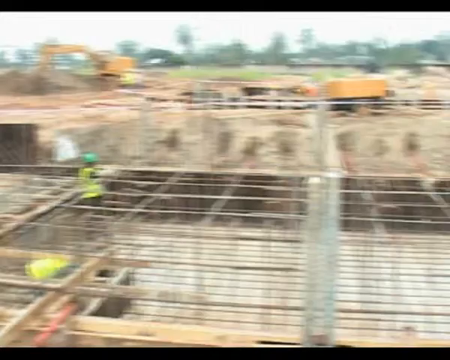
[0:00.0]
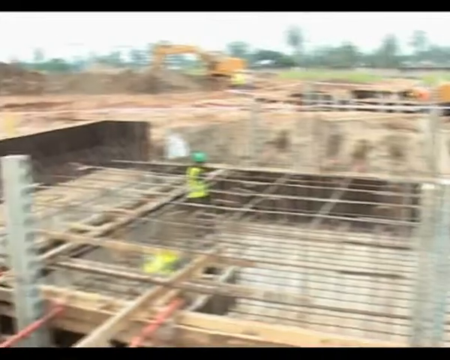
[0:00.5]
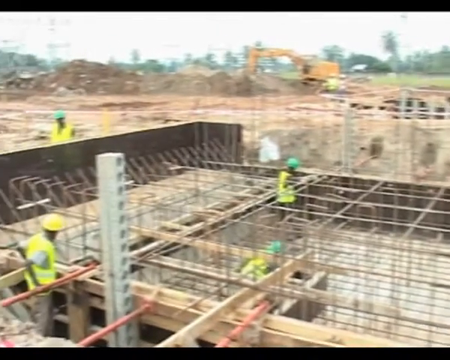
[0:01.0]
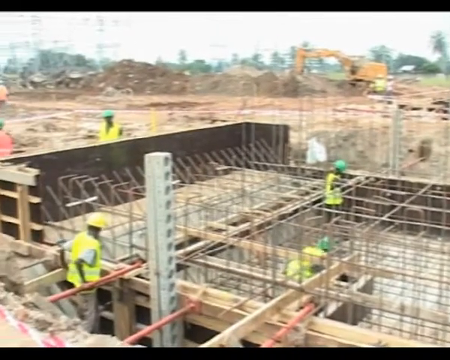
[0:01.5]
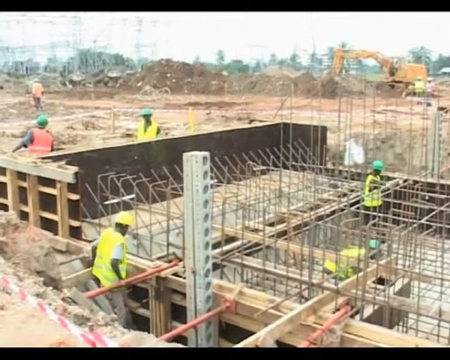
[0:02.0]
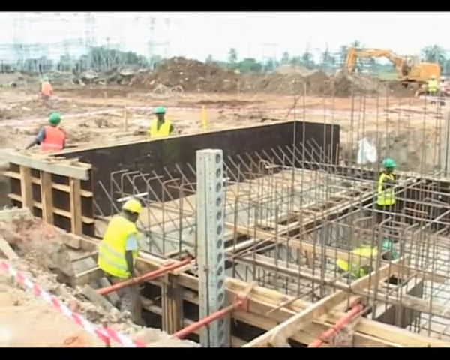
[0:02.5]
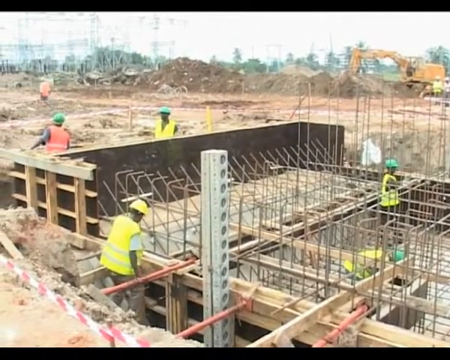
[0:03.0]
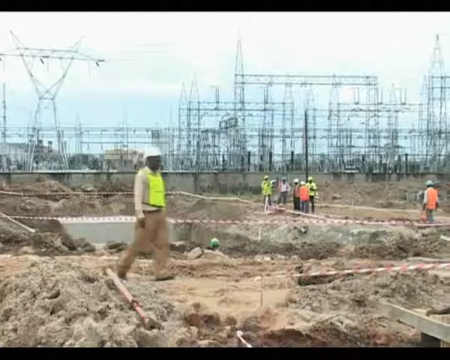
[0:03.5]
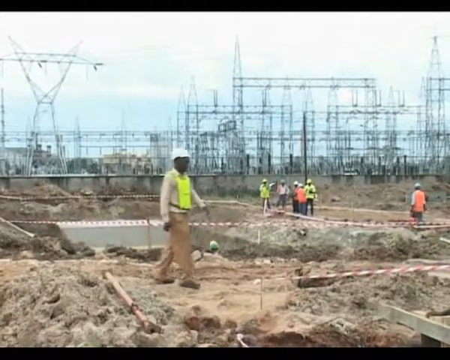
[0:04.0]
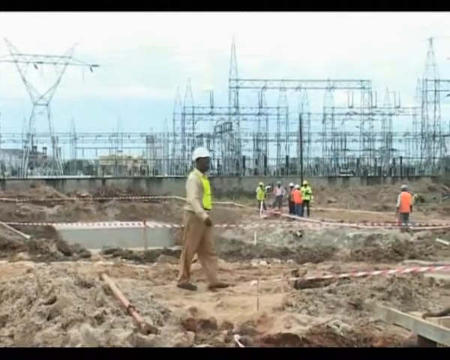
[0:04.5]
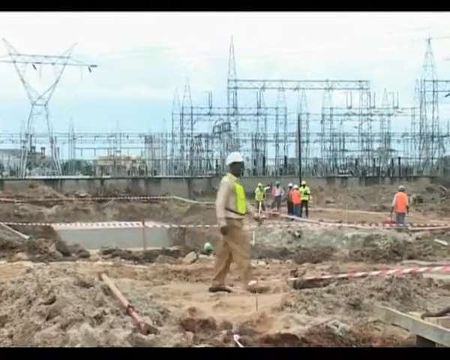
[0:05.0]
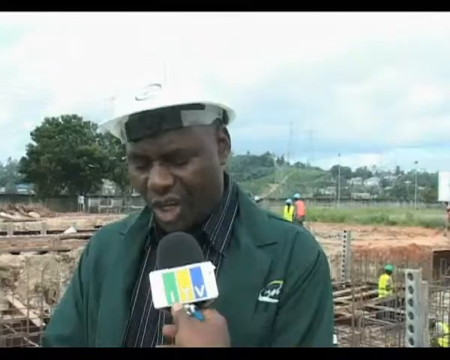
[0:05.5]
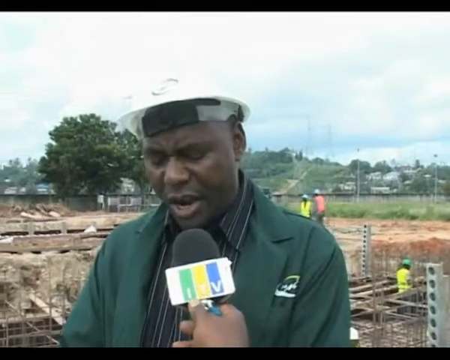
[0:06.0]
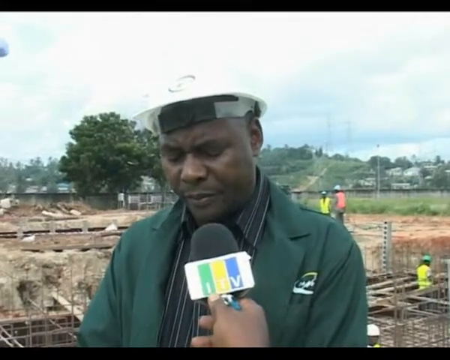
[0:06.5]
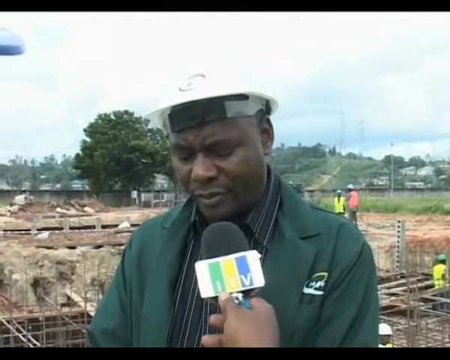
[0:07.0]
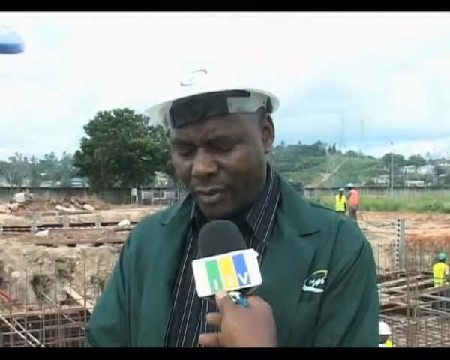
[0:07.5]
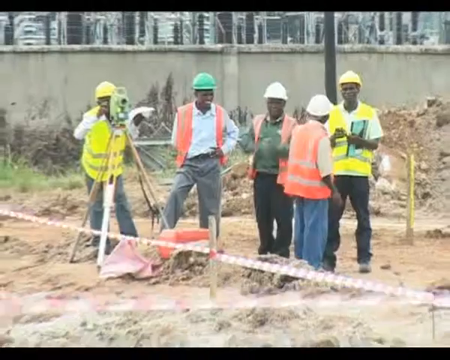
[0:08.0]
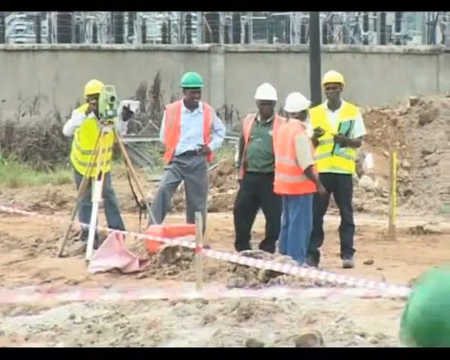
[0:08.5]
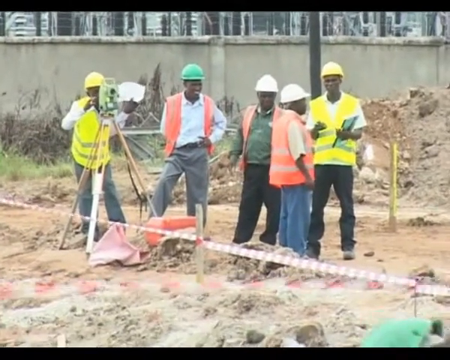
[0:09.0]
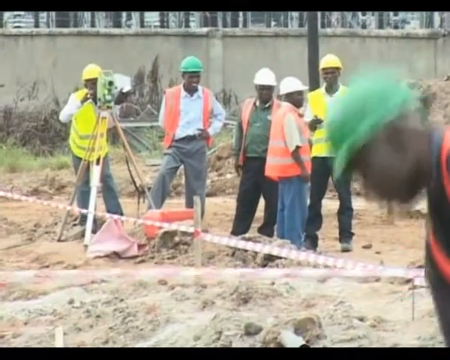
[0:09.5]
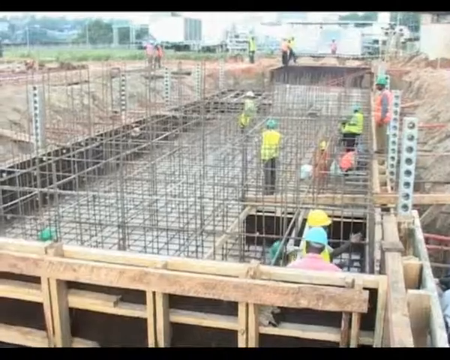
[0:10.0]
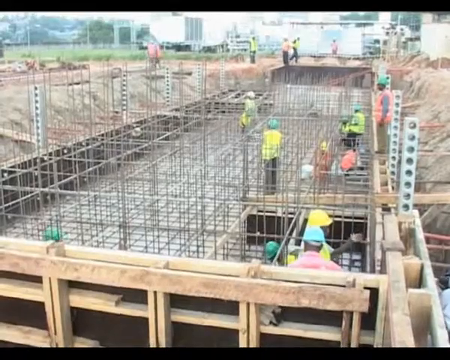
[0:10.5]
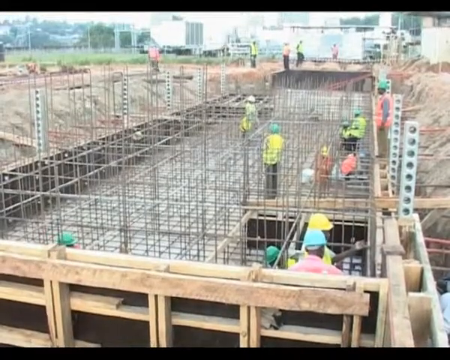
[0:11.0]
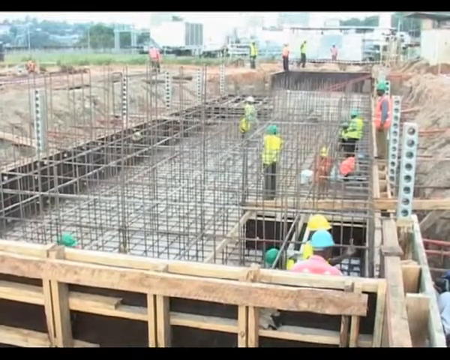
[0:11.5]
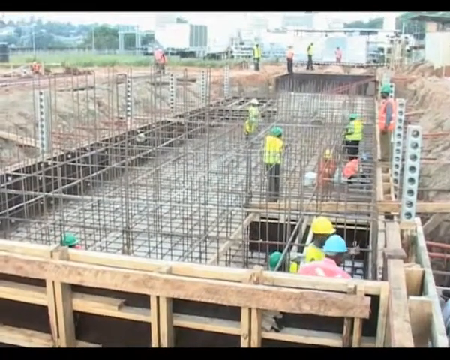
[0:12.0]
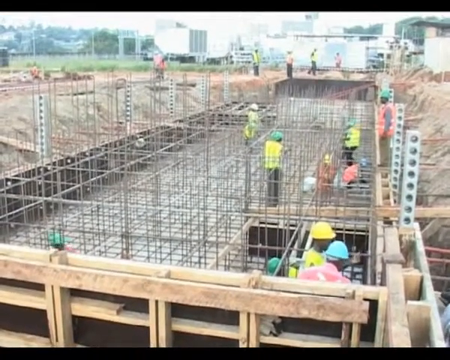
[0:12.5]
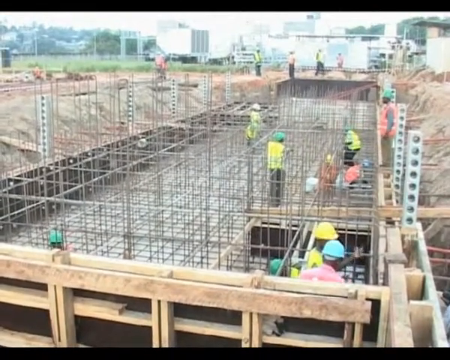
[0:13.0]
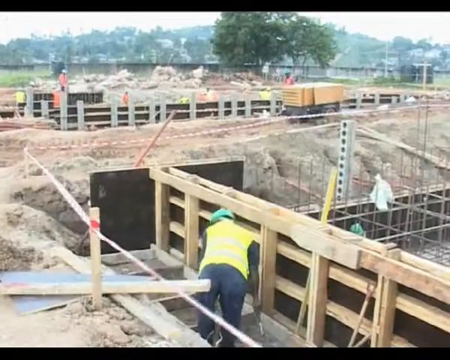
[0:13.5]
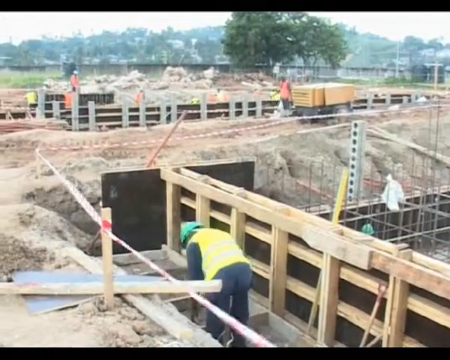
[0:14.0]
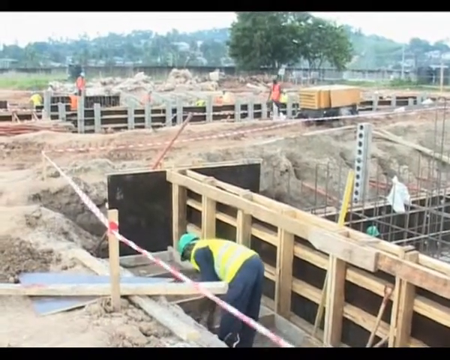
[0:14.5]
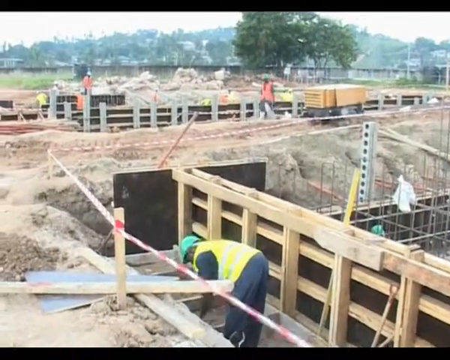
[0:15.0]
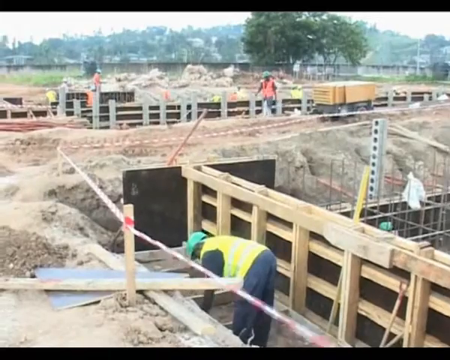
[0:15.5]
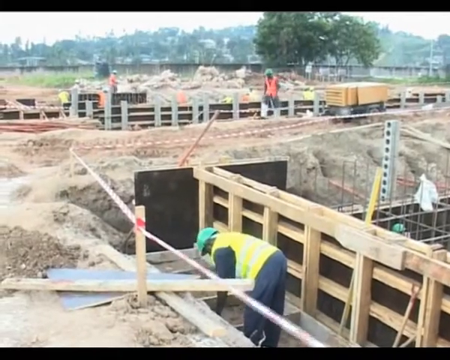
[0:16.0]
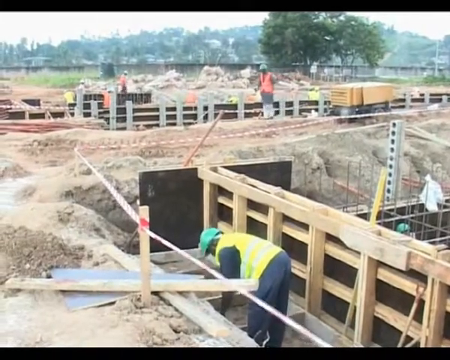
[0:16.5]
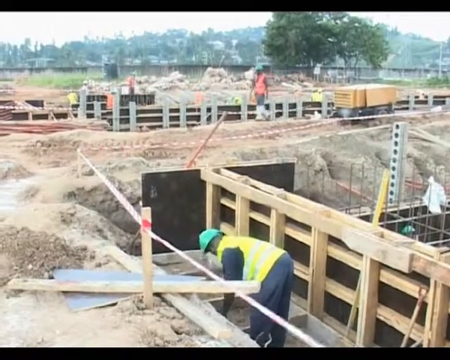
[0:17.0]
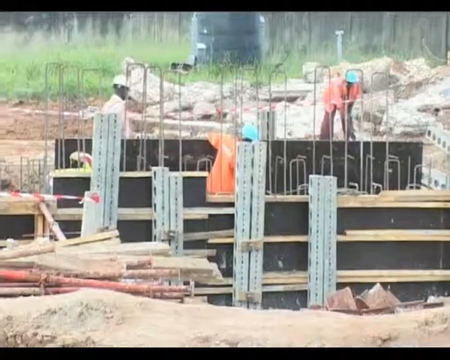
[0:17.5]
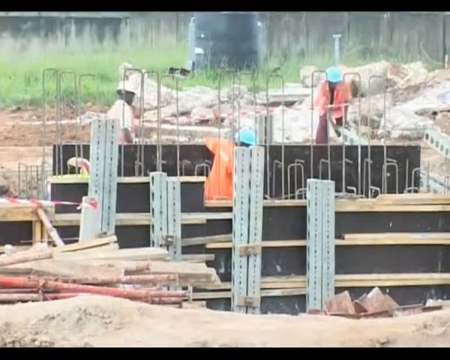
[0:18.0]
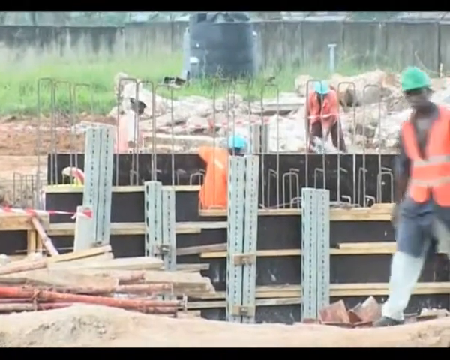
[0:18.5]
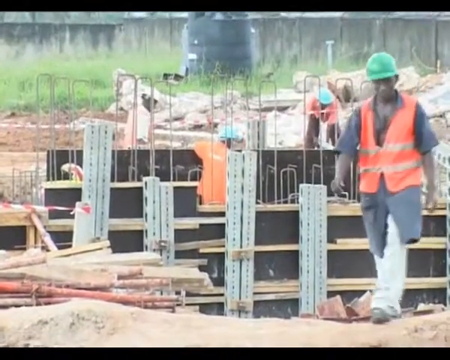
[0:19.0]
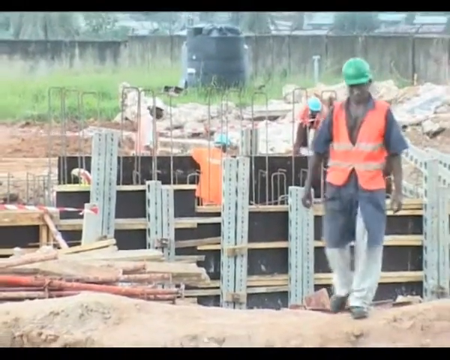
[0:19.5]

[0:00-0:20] An ongoing construction site is shown. Men stand on scaffolding that looks like the foundation for a building; it includes lots of metal rods bent into shape and wooden beams that form a frame inside the dugout earth. In the background there is lots of dugout soil and a large yellow earth-moving construction vehicle. The men wear yellow safety vests and yellow and green safety hats. Lots of power lines and electricity towers are visible in the background behind a wall. The men walk up and down. One man is being interviewed; he wears a dark green jacket over his shirt and a white safety helmet, and the reporter's hand holding a microphone is visible. Next, more men stand around wearing orange and yellow safety vests. One of the men looks through an instrument and seems to be the site surveyor. The construction activities continue.